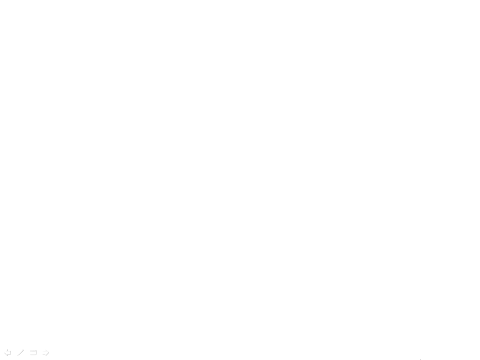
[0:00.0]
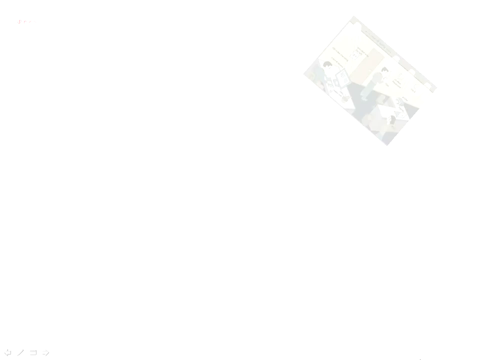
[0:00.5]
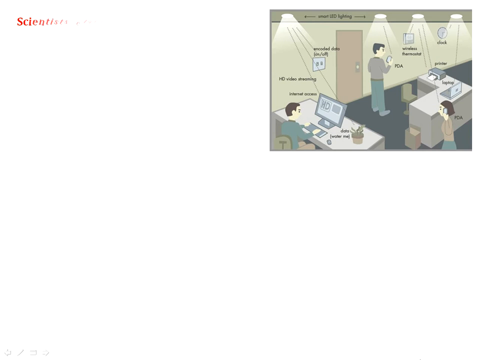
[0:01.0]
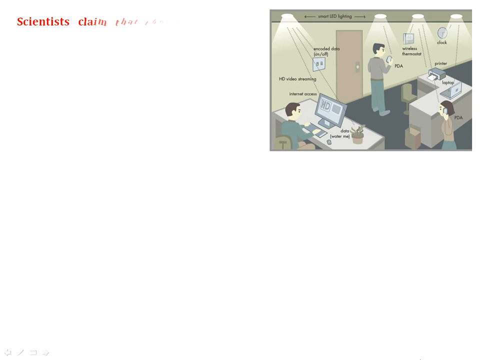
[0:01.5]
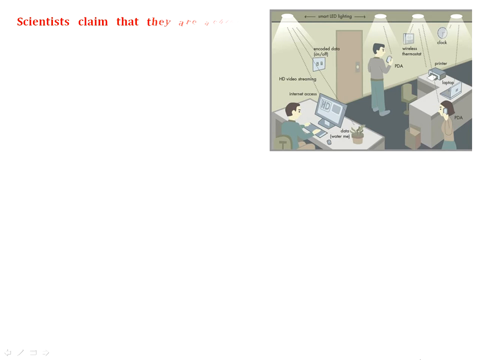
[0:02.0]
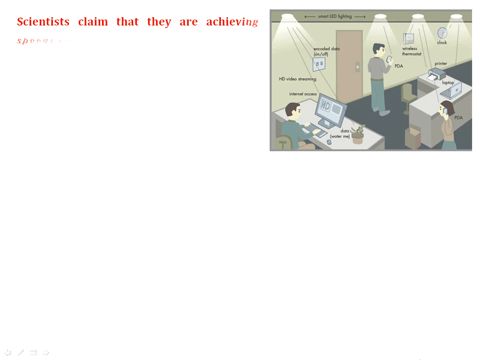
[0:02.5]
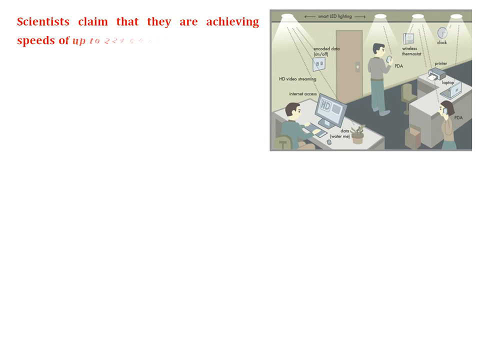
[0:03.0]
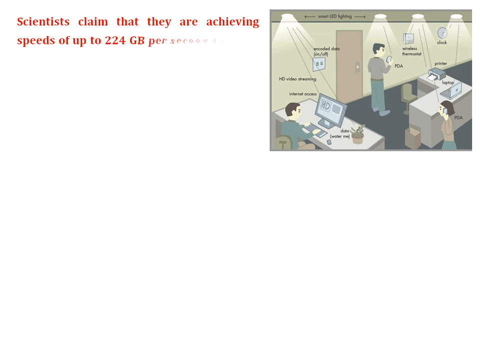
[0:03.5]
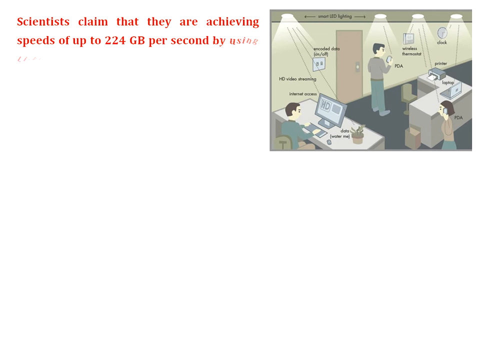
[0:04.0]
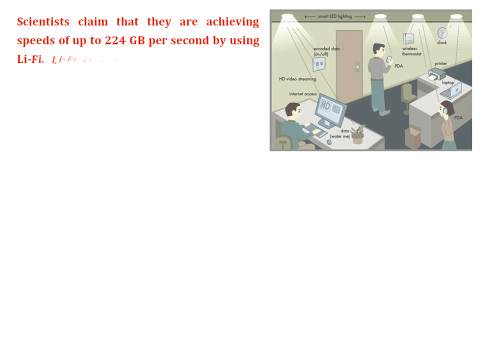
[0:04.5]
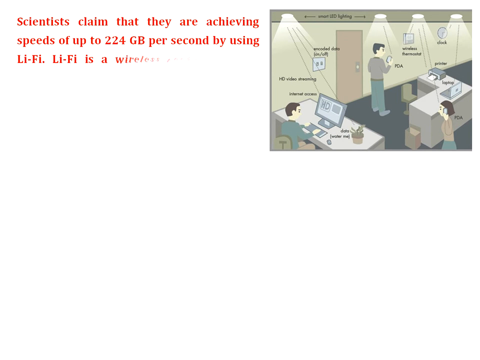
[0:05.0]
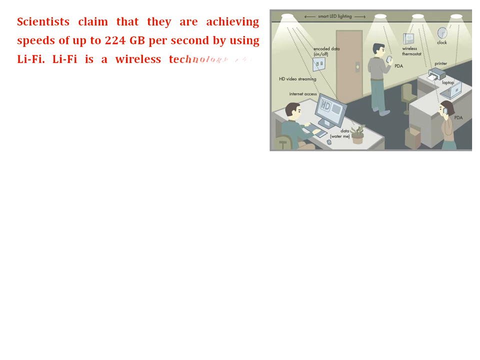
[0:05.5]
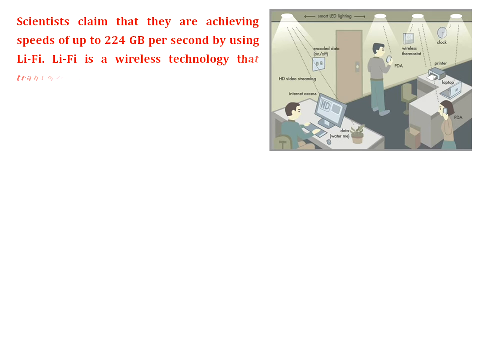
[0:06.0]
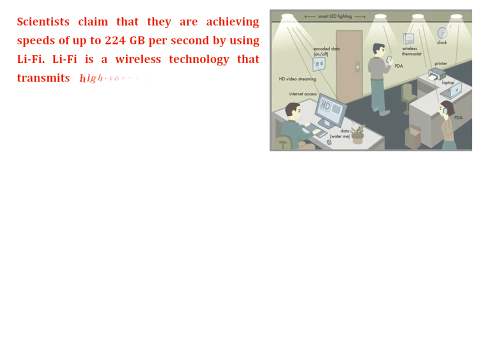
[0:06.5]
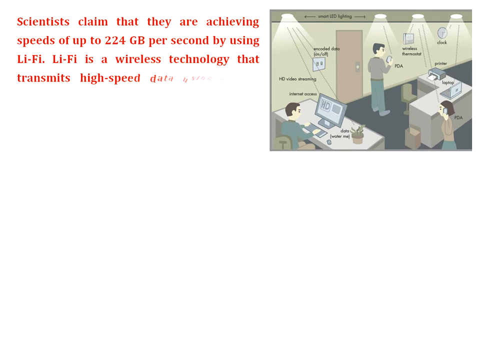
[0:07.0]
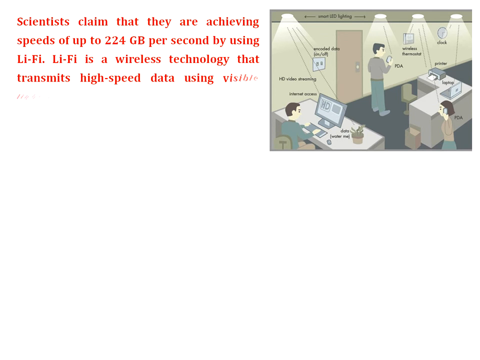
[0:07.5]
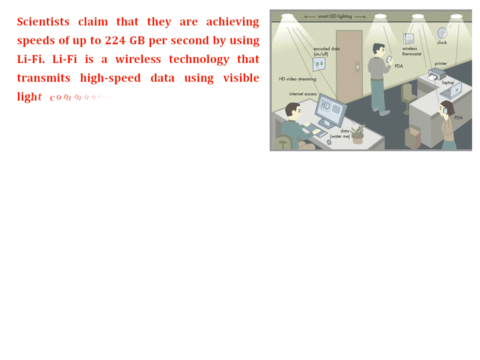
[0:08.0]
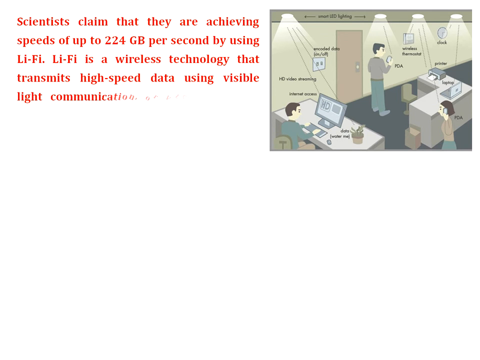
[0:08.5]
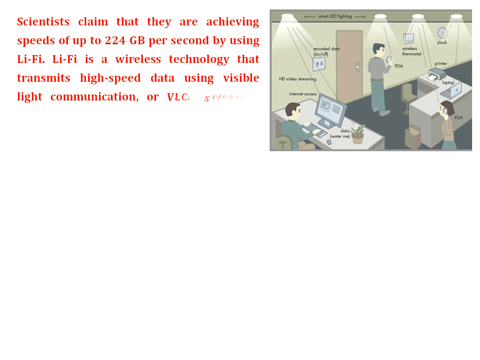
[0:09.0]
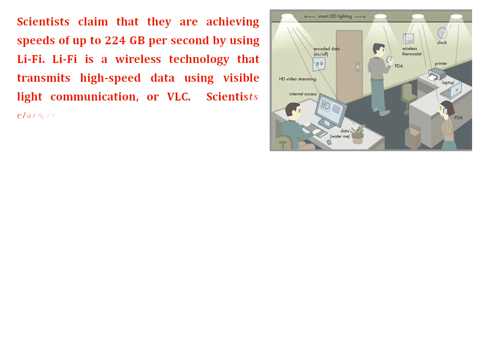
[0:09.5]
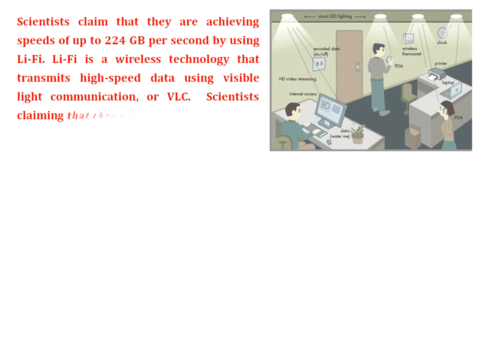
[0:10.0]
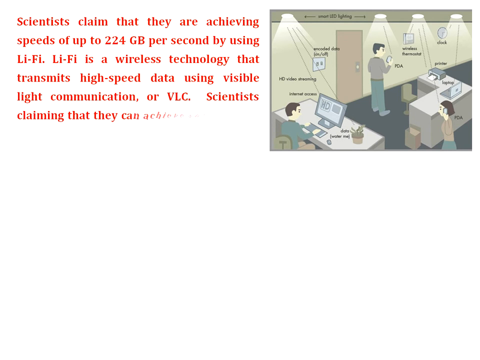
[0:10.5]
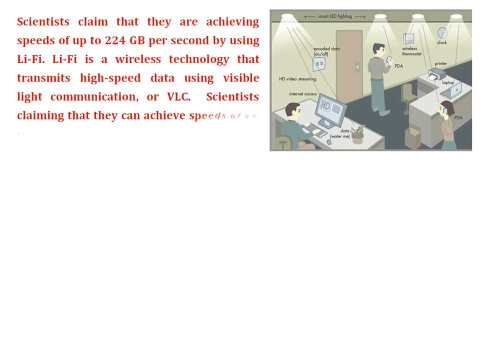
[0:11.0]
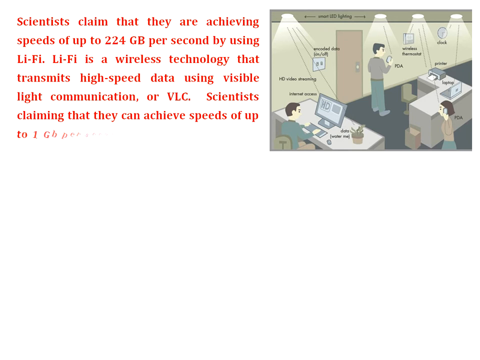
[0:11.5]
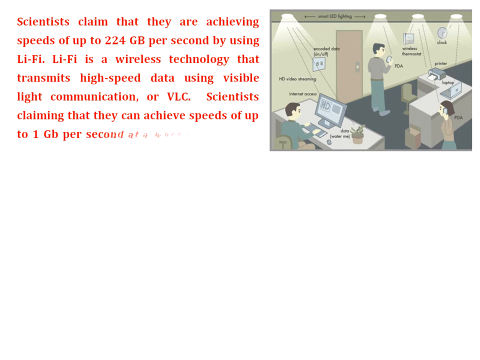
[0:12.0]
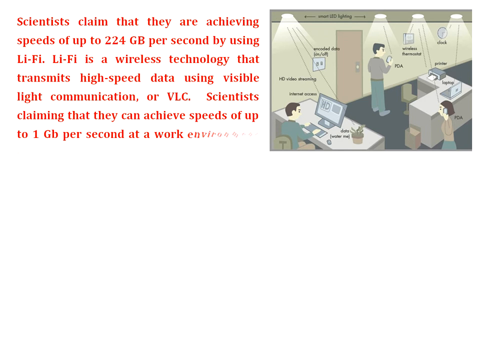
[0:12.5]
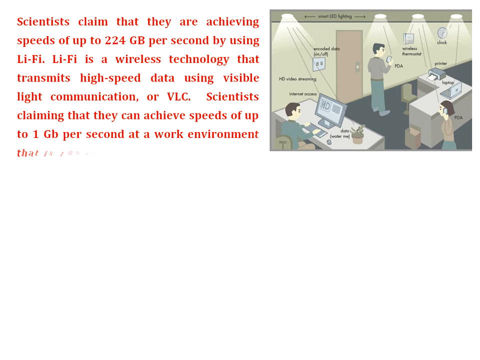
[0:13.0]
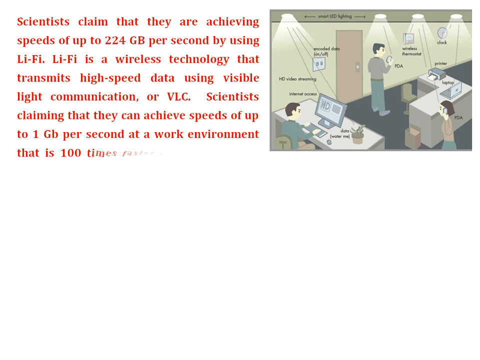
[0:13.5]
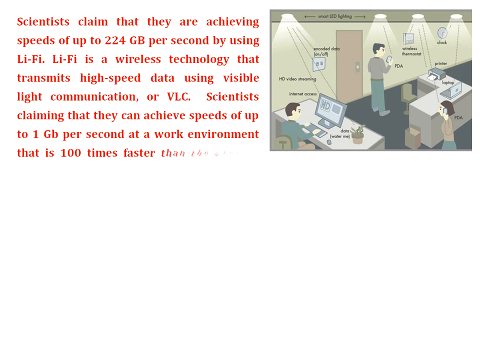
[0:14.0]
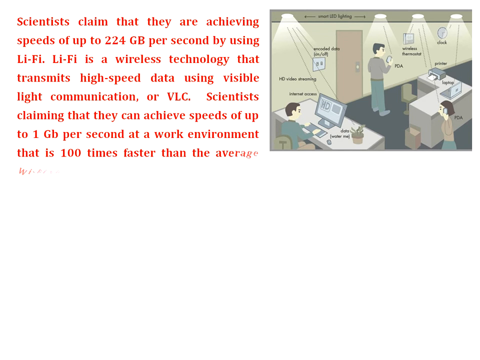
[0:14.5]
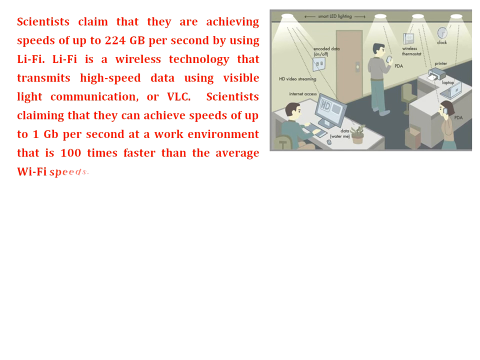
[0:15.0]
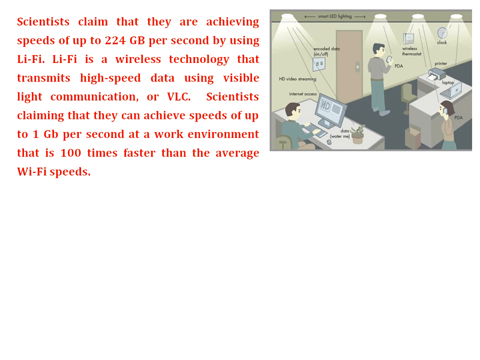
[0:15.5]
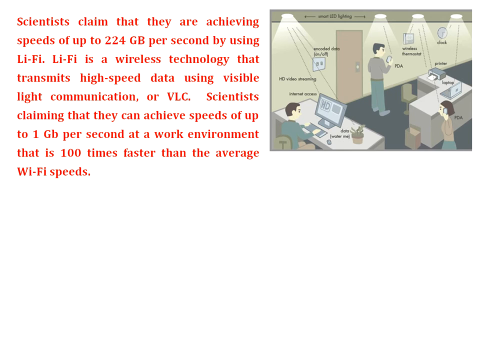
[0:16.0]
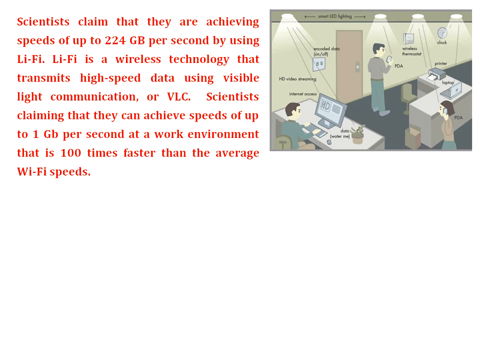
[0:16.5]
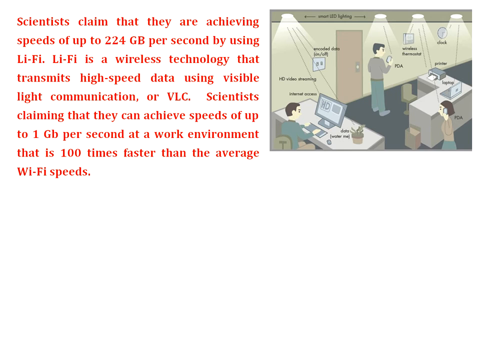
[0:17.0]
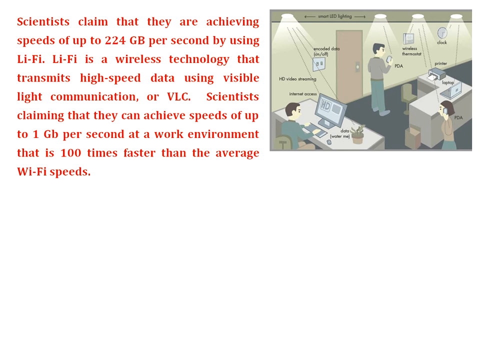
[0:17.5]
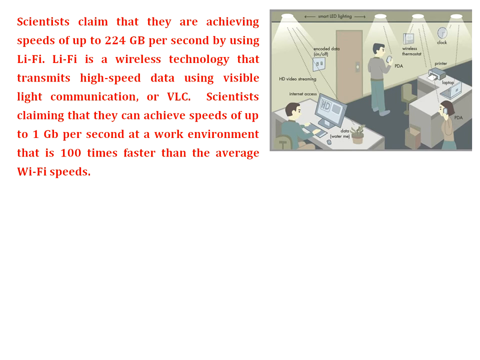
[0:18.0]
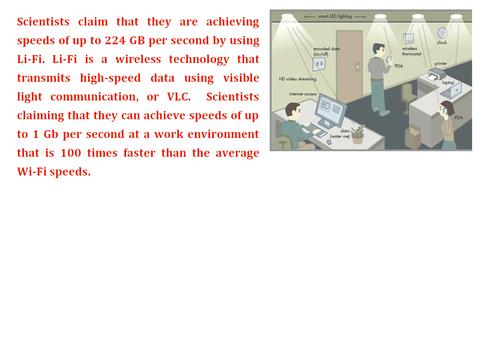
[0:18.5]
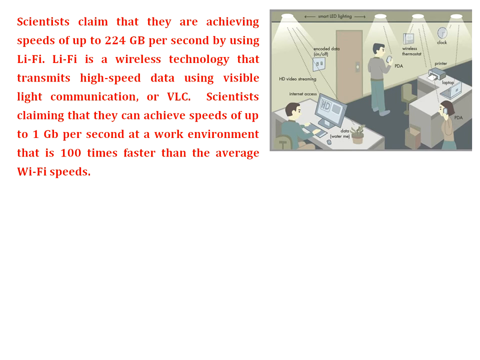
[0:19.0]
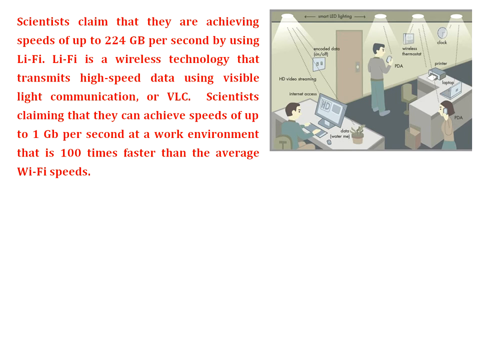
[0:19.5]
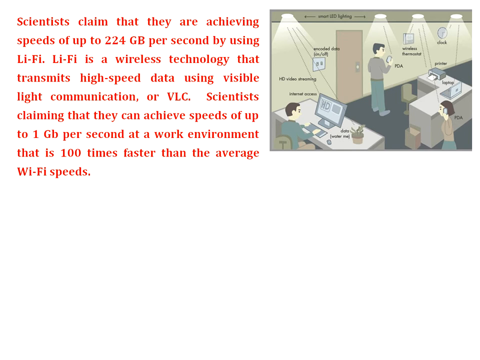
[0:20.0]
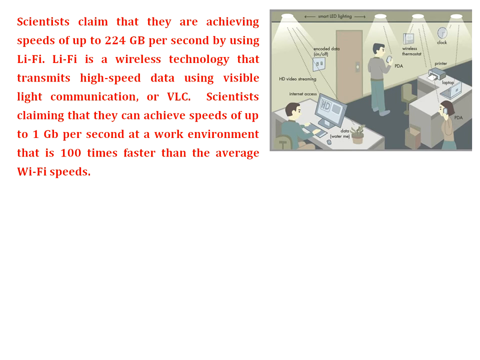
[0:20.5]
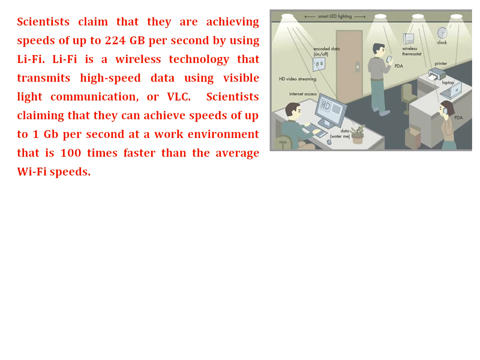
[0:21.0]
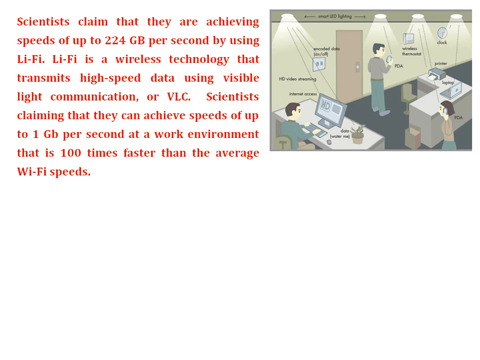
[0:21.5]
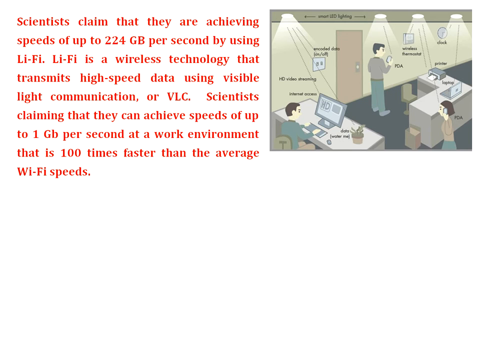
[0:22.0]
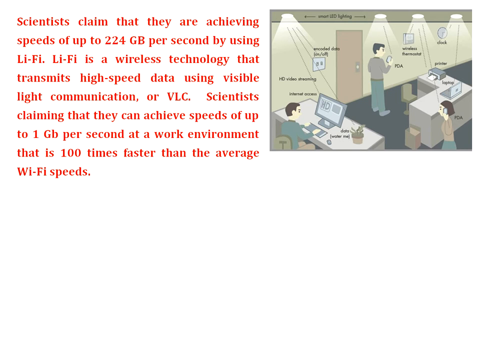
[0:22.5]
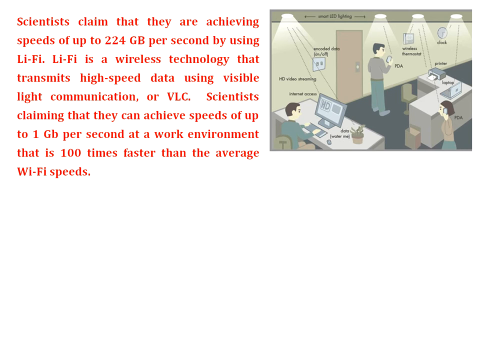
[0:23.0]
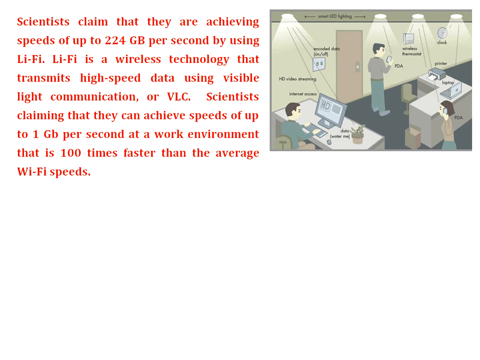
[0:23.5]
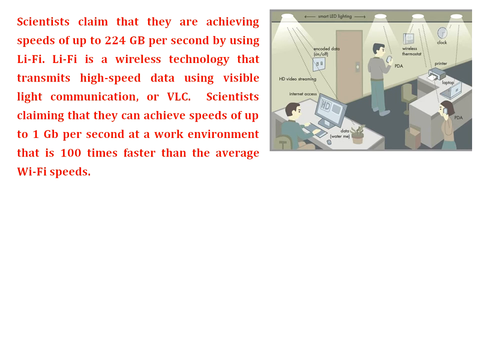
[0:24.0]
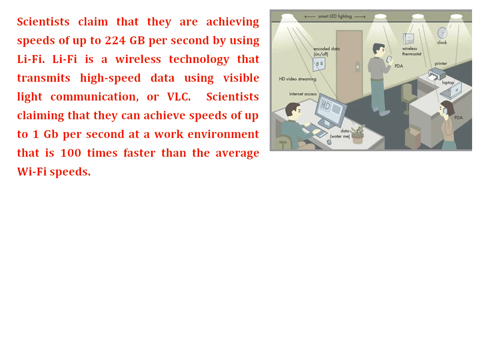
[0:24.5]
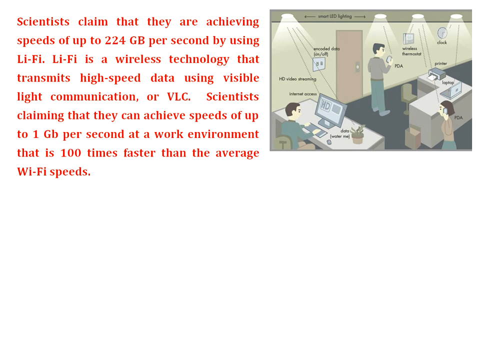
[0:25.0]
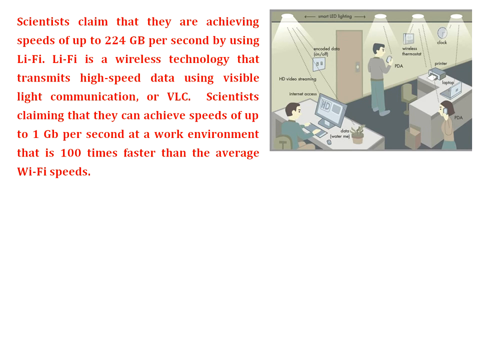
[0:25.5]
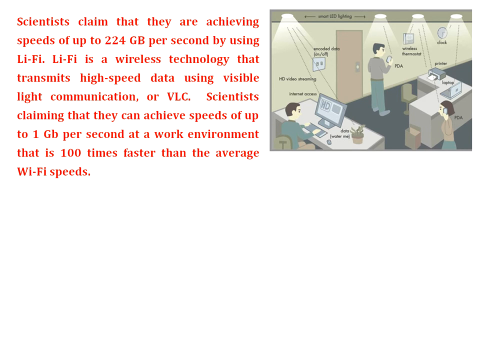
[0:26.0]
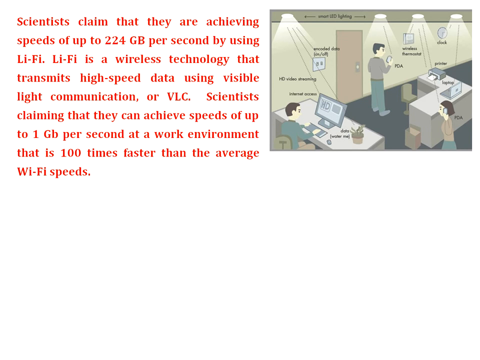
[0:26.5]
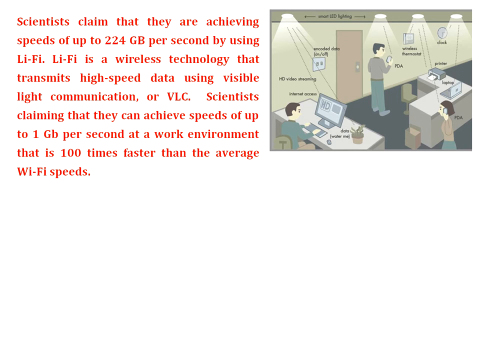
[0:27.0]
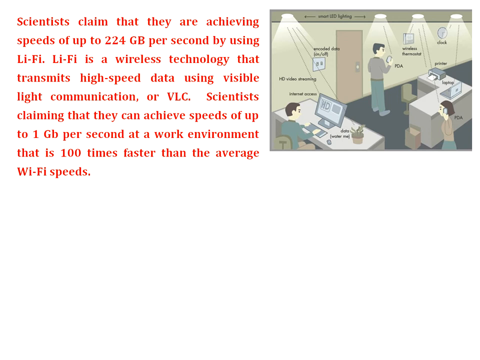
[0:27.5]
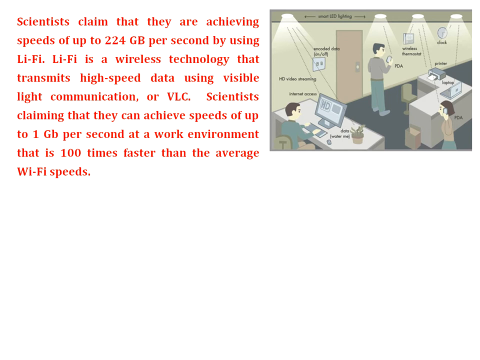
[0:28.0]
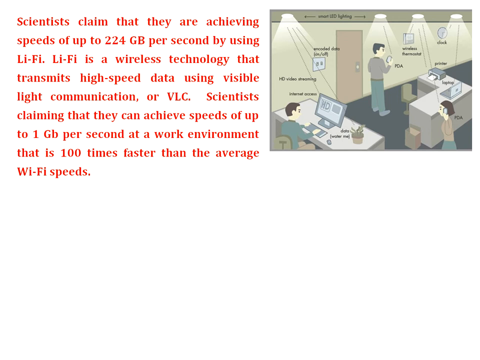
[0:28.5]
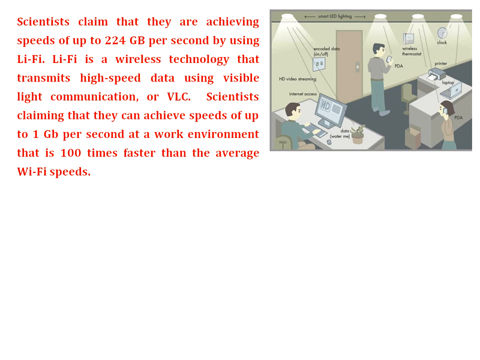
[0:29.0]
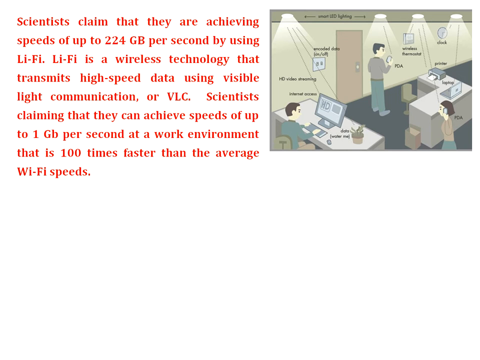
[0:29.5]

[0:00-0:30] Cartoon-like people are in a workspace with computers, lights and other components that suggest they are scientists. There are also doors and dustbins. The people wear what seems to be a uniform of a grey top with green jeans or green pants, and the one who is sitting wears a green top with grey pants.